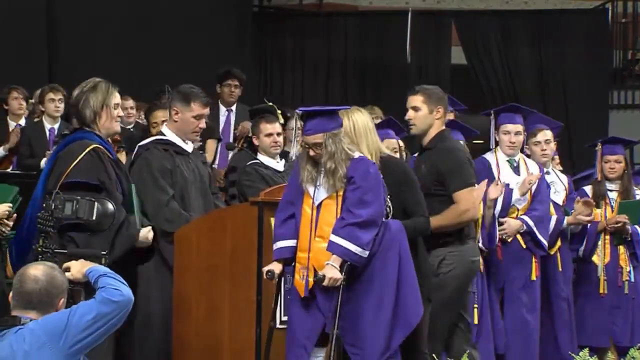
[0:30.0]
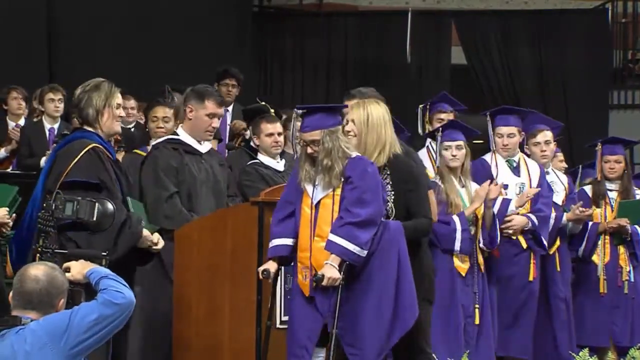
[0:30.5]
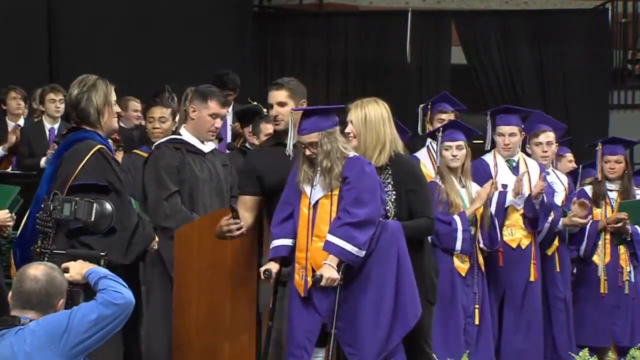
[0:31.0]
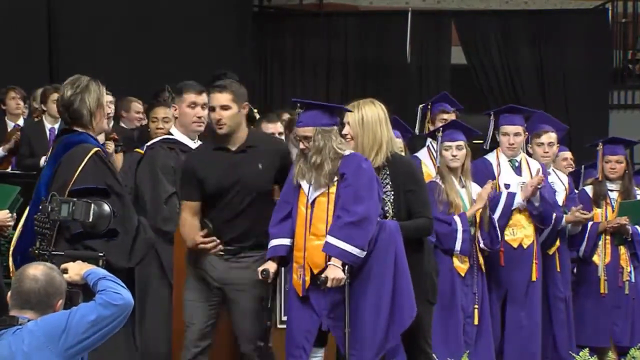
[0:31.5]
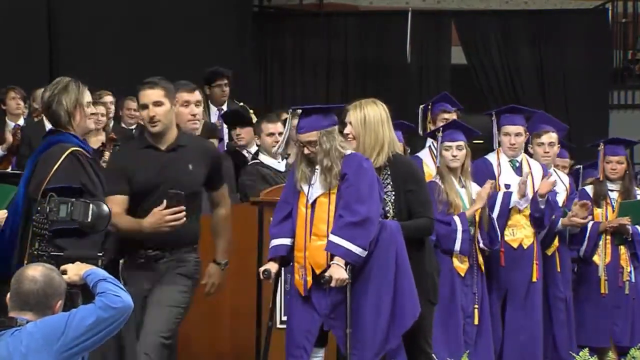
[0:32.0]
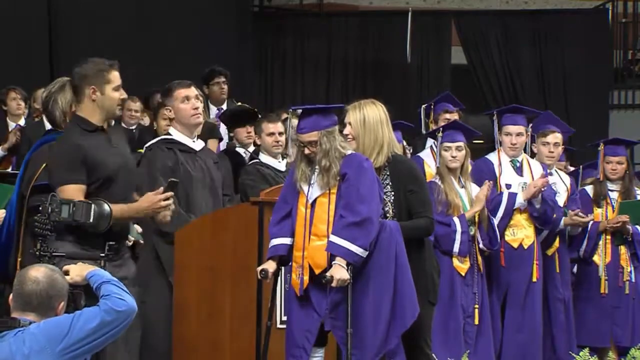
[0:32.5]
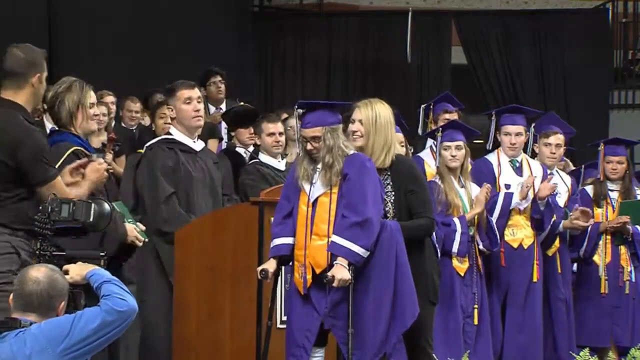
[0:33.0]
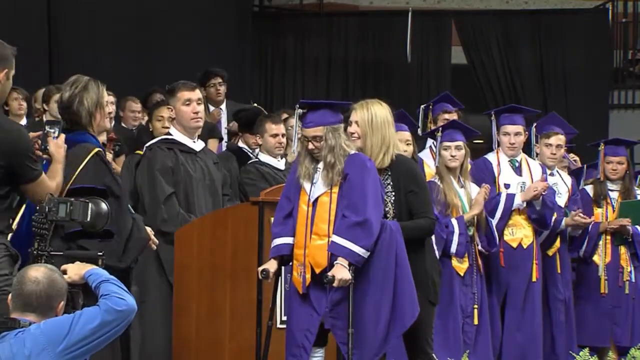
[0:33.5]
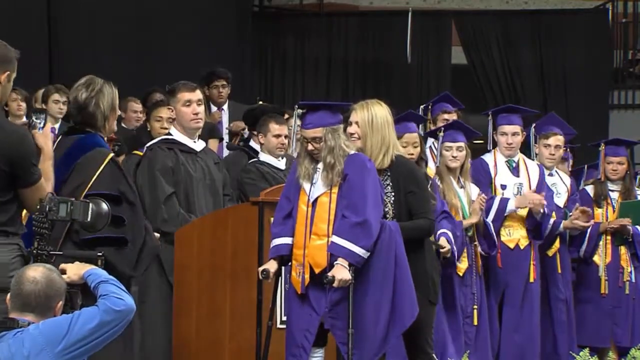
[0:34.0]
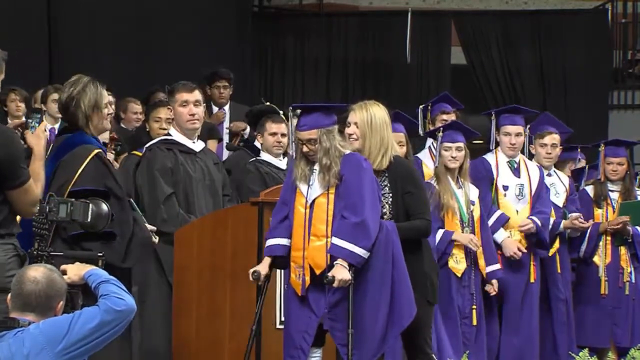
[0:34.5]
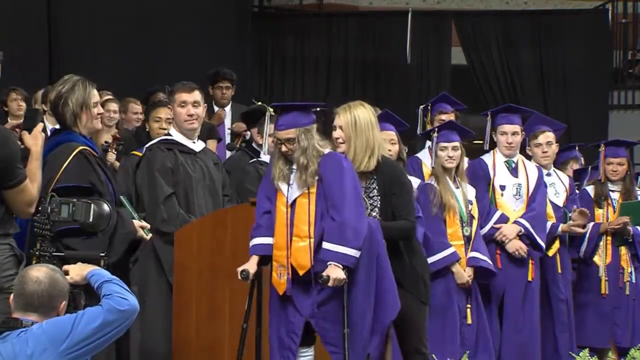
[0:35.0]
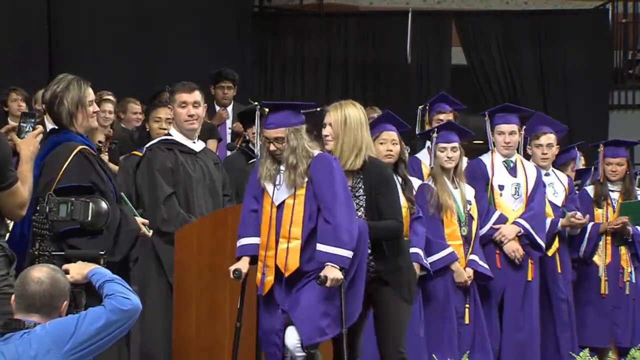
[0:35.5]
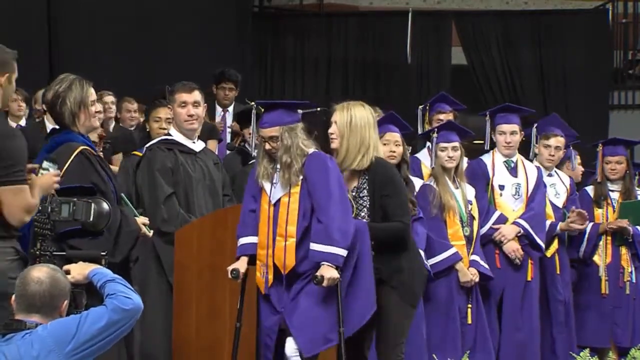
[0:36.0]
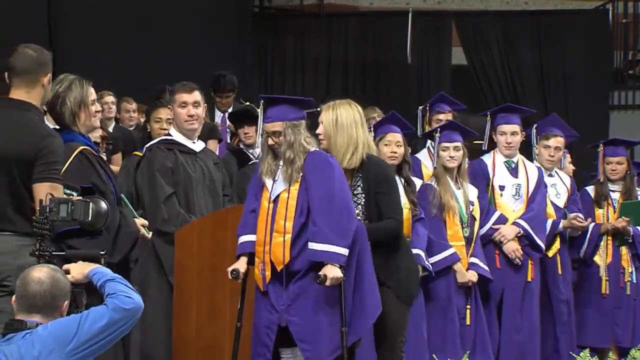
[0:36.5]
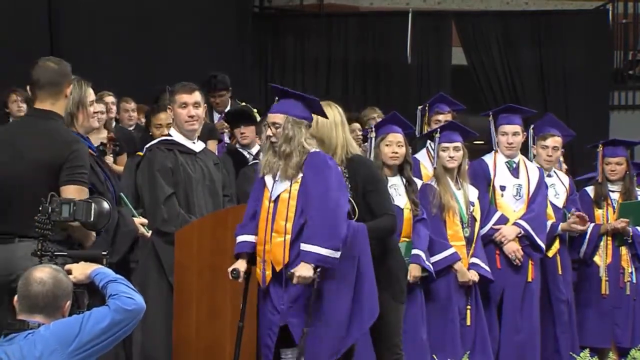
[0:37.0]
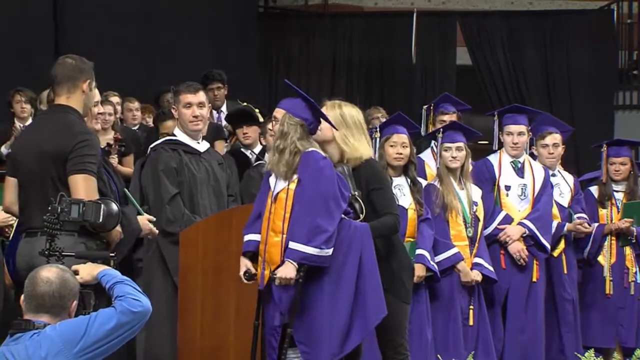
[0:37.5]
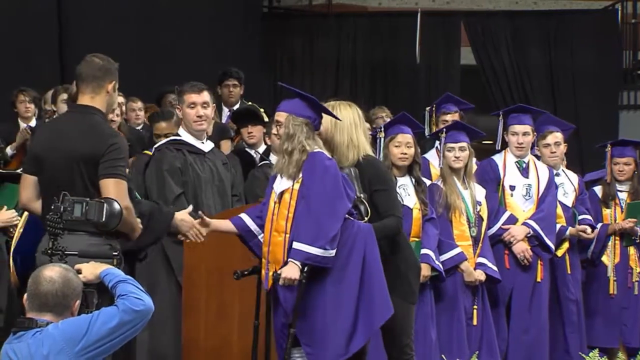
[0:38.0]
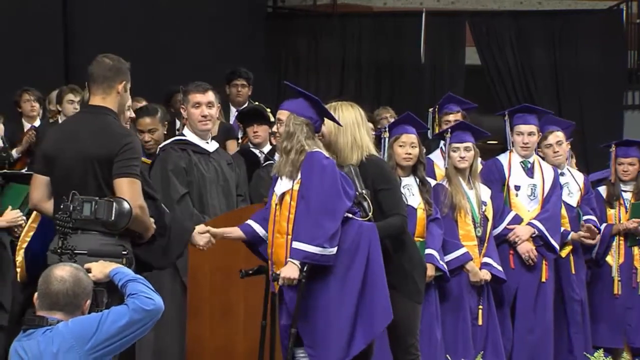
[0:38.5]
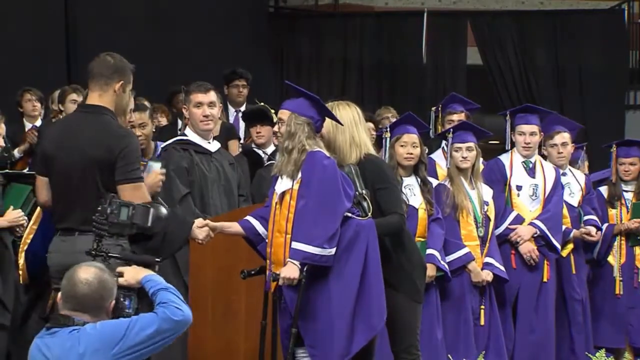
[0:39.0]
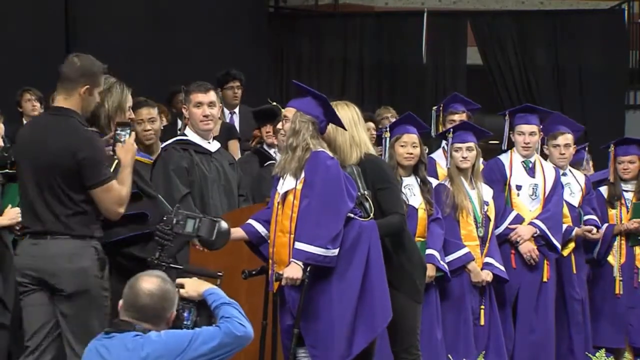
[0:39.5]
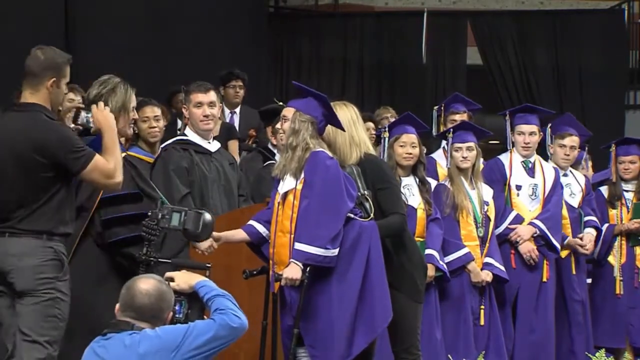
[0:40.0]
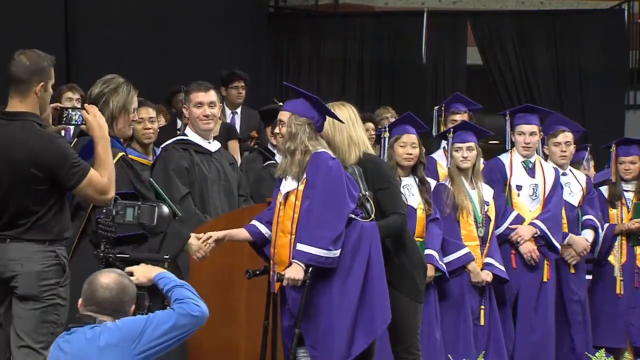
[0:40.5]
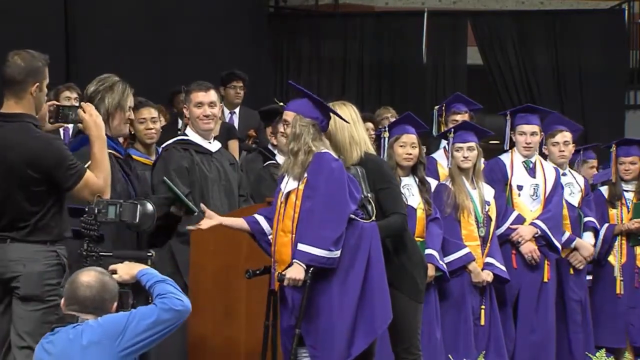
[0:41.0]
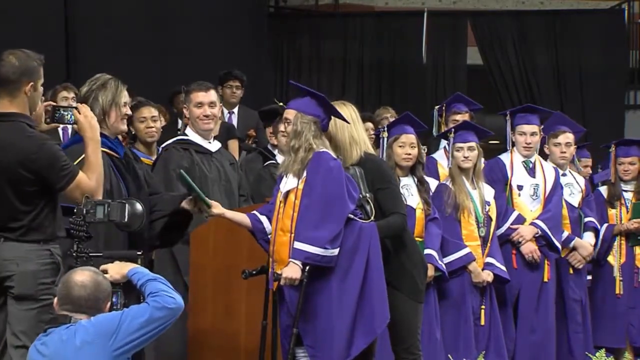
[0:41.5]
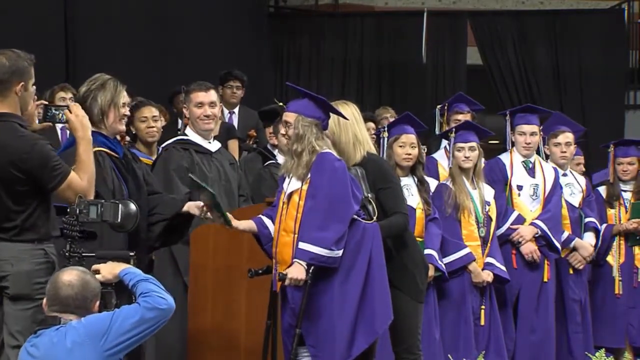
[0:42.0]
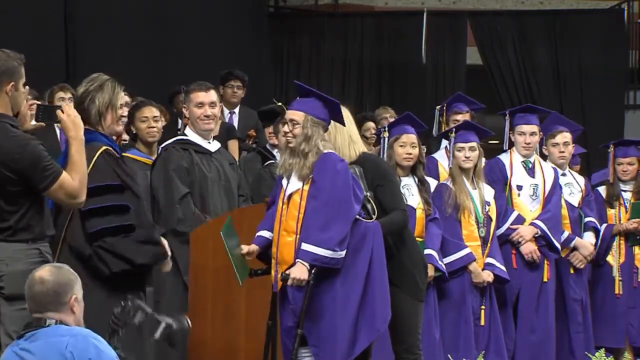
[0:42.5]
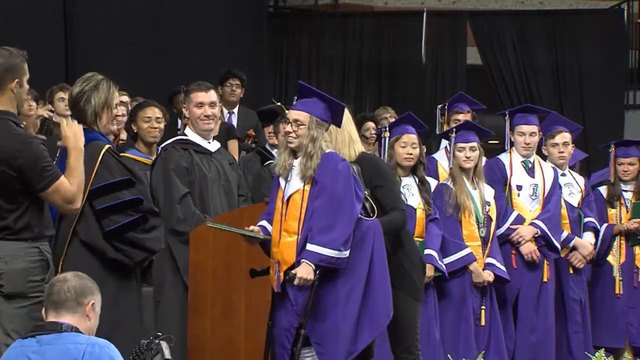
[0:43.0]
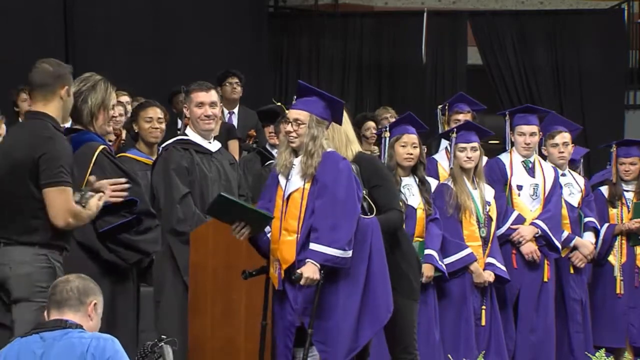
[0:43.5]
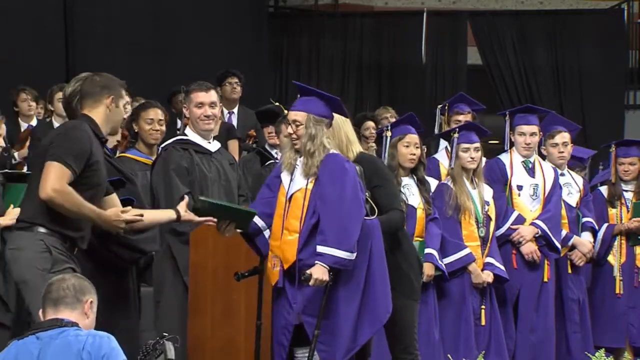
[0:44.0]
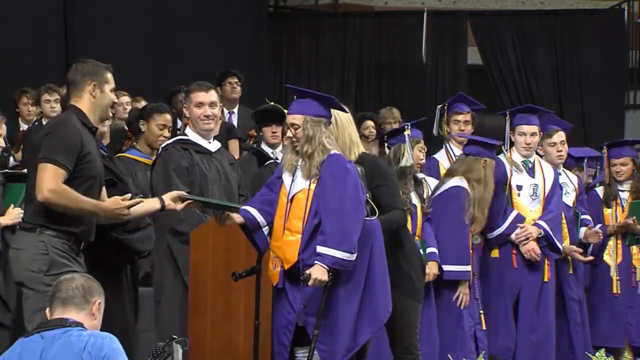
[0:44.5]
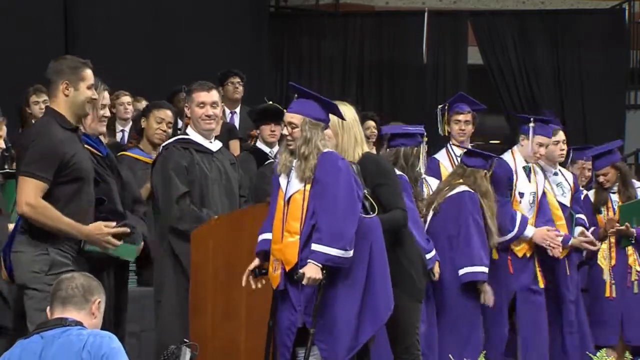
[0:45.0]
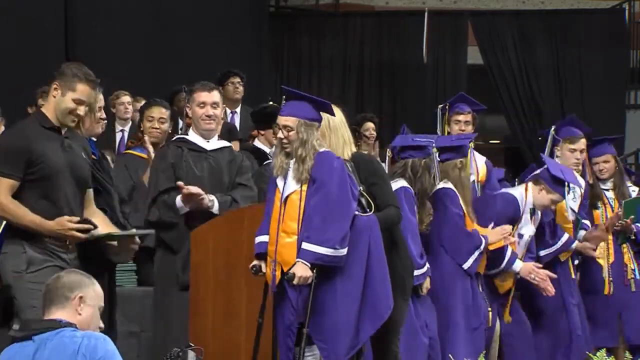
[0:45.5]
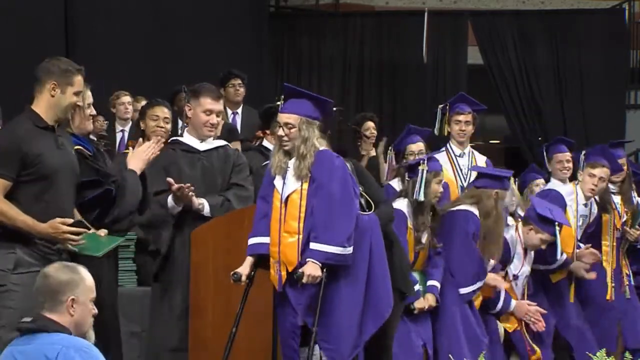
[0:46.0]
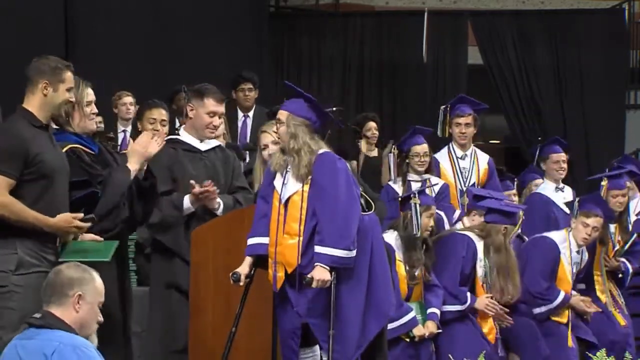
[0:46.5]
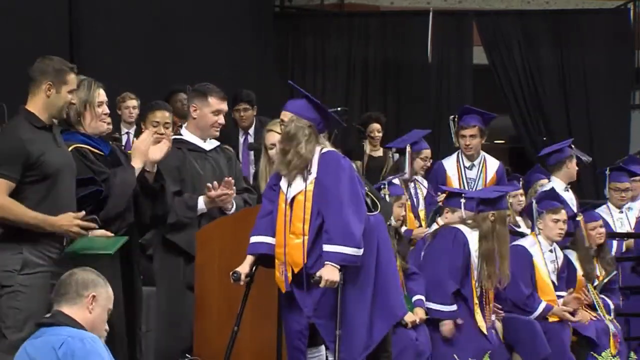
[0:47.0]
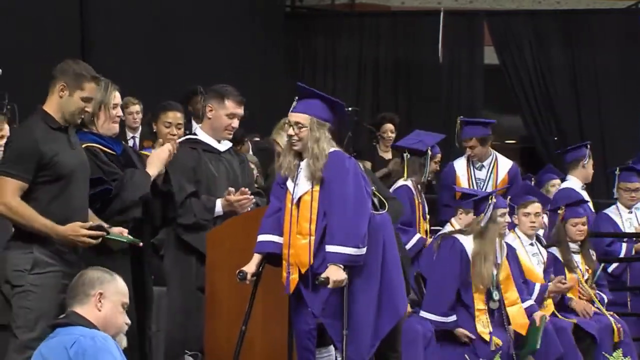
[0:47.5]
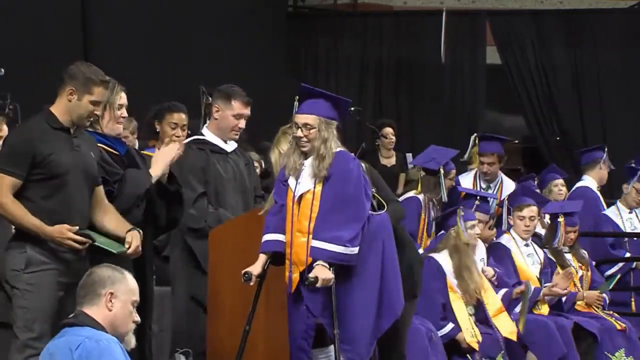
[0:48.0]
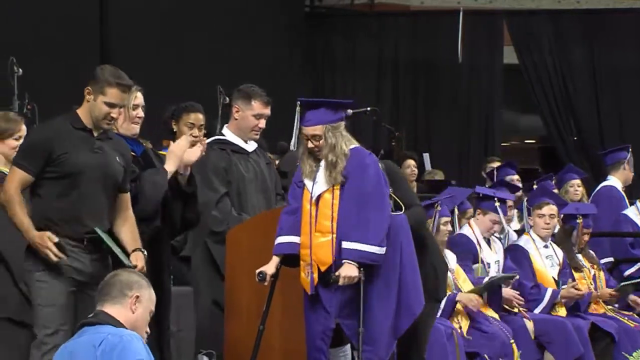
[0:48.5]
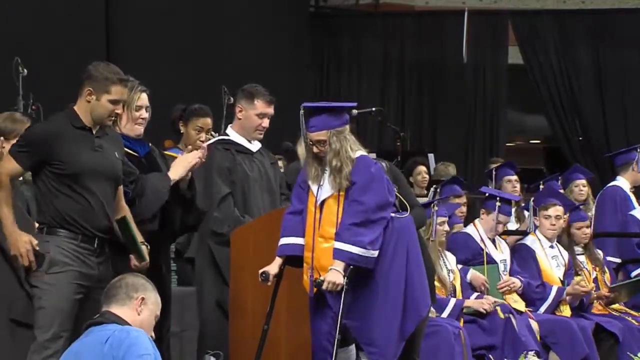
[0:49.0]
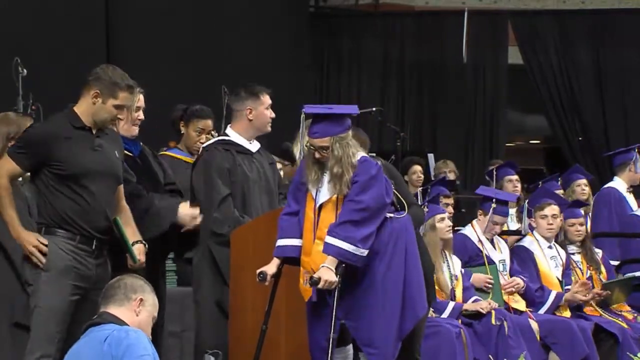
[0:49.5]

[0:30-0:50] At the 2017 James River High School graduation, the young woman, Makala Morris, holds a cane in each hand as she makes her way to the front to get her graduation papers. The rest of the class and the instructors clap their hands; many people are smiling and many have become emotional.